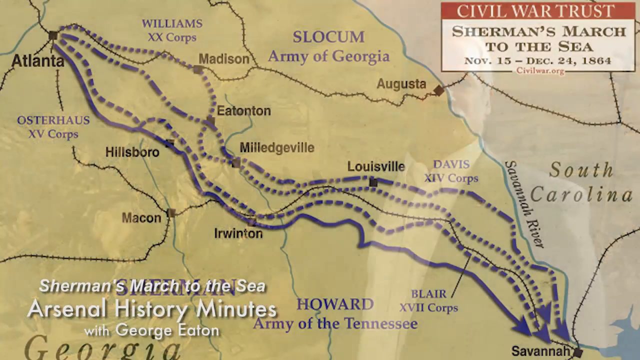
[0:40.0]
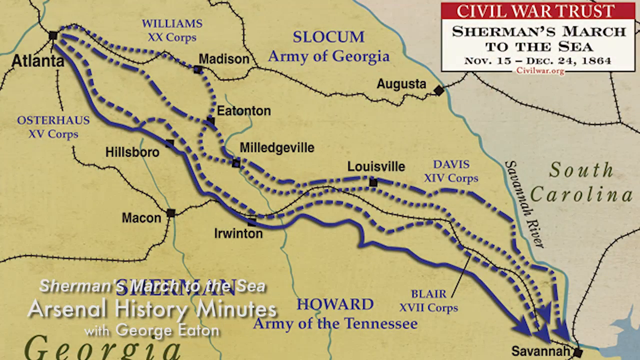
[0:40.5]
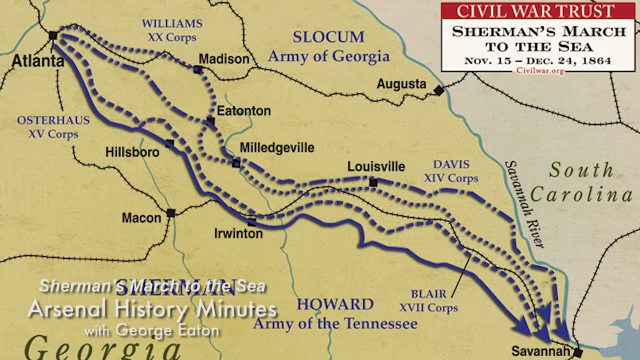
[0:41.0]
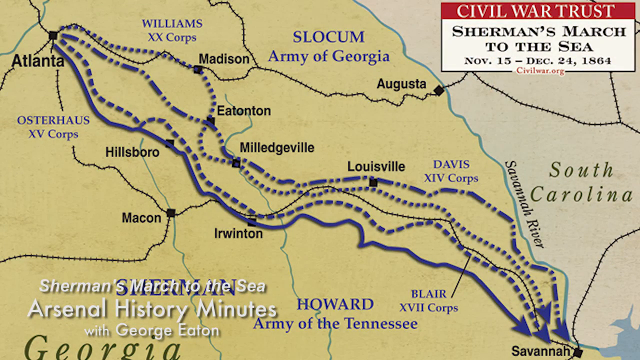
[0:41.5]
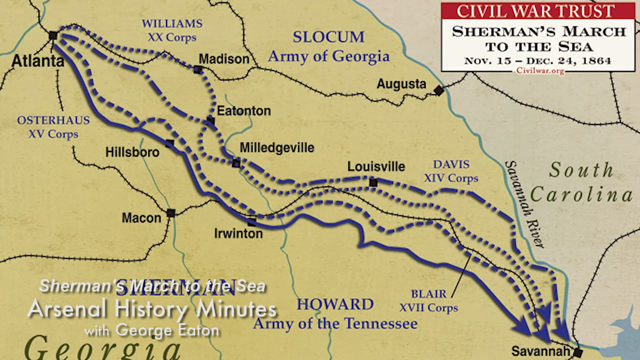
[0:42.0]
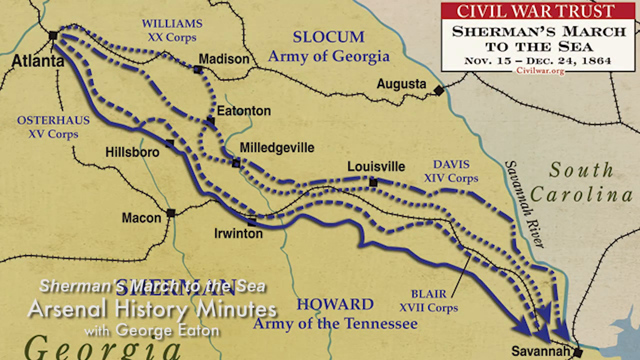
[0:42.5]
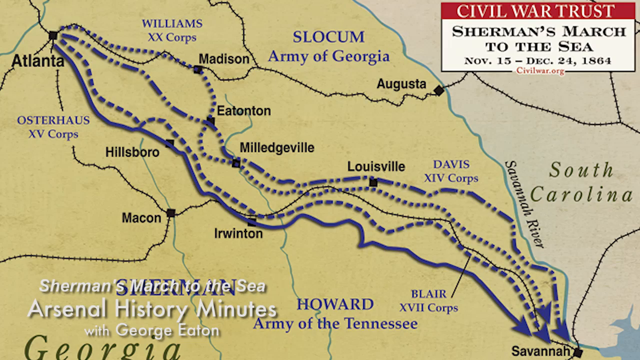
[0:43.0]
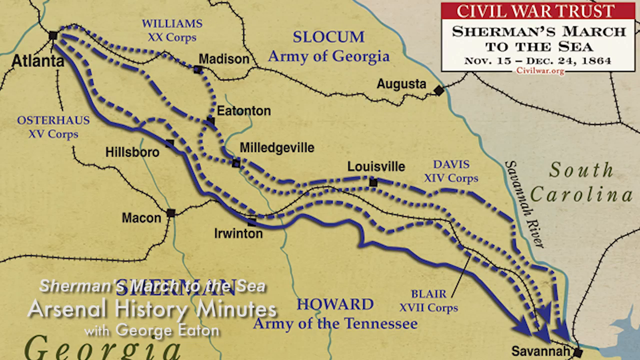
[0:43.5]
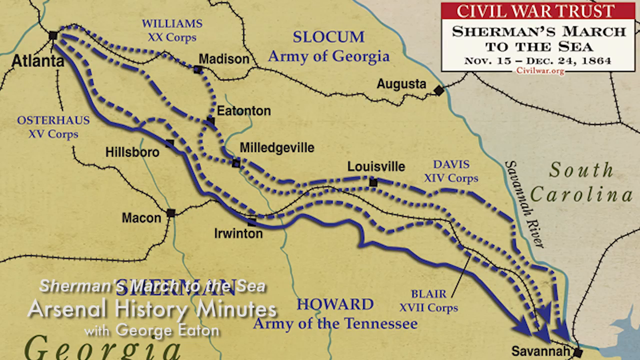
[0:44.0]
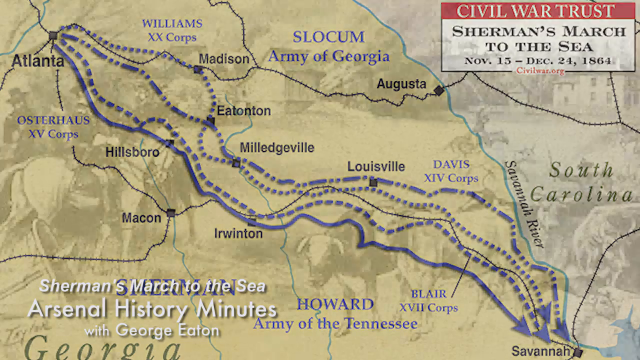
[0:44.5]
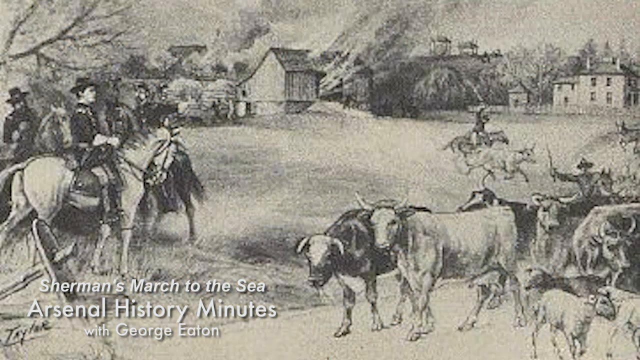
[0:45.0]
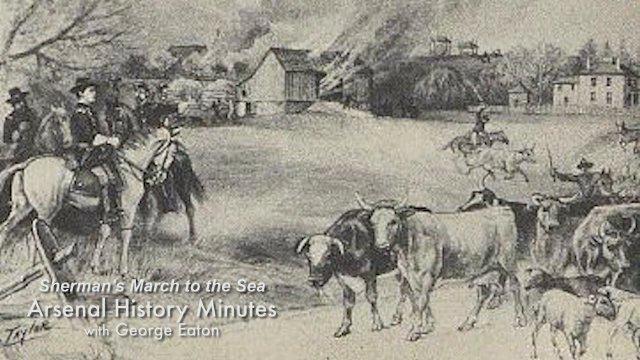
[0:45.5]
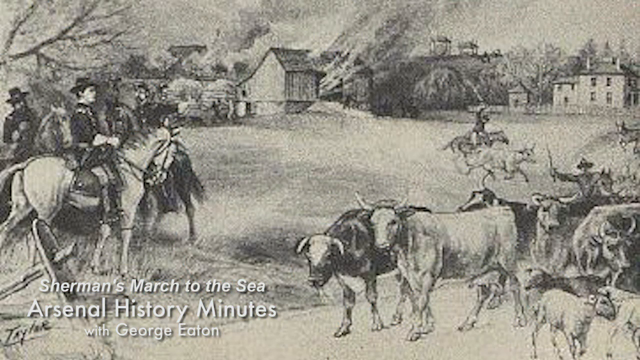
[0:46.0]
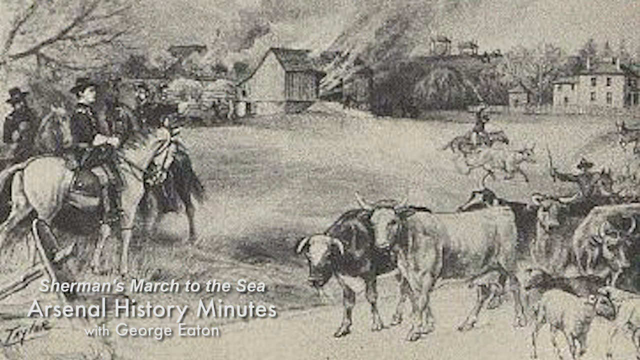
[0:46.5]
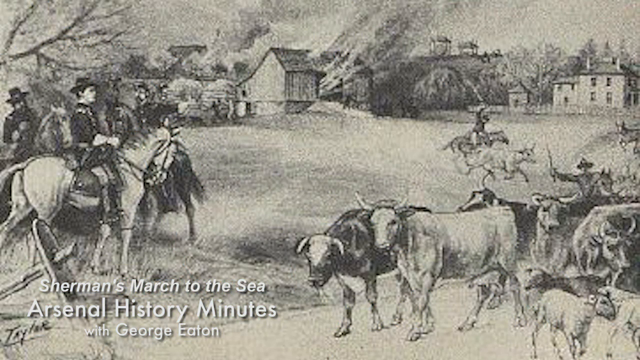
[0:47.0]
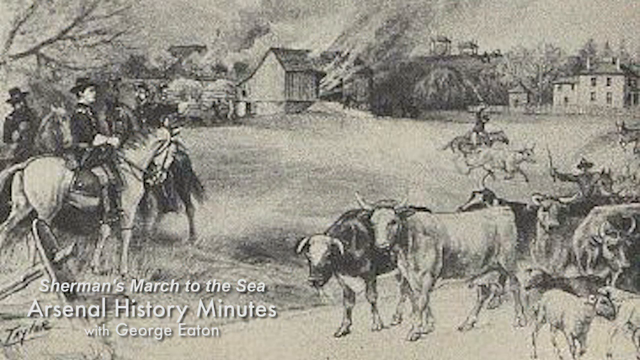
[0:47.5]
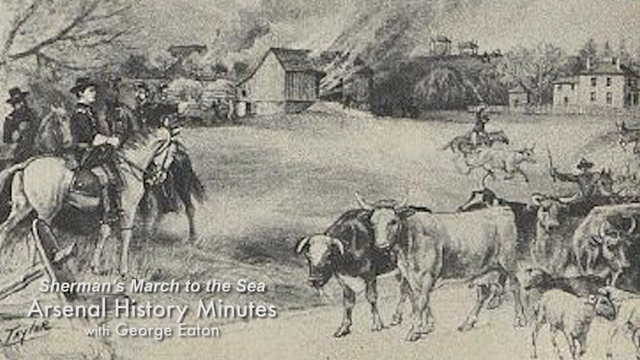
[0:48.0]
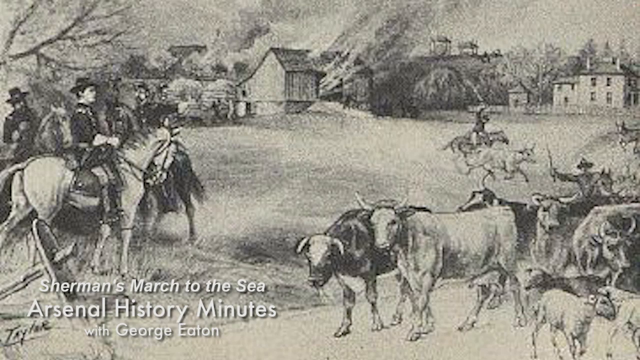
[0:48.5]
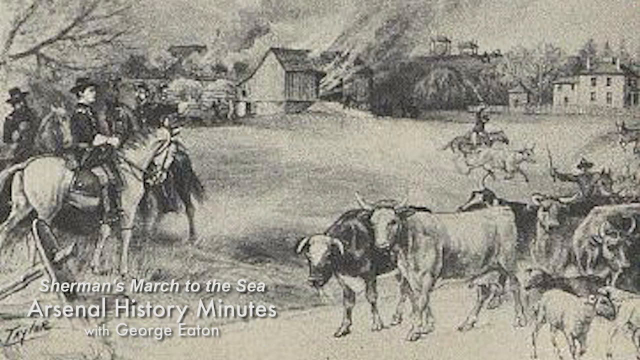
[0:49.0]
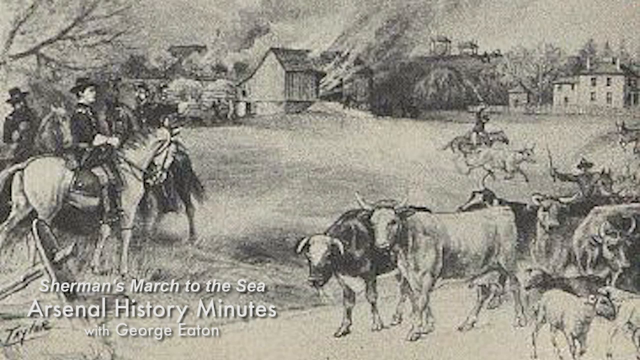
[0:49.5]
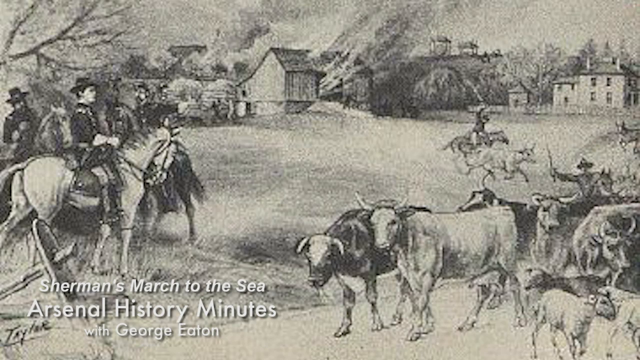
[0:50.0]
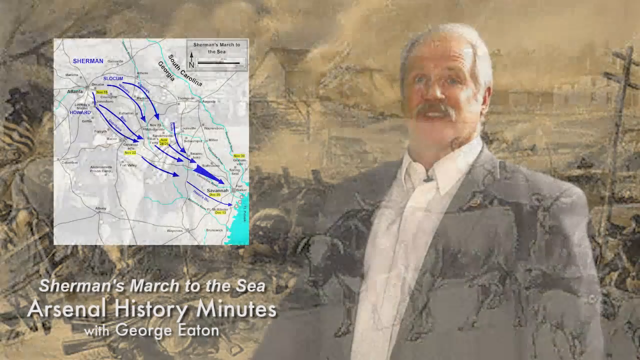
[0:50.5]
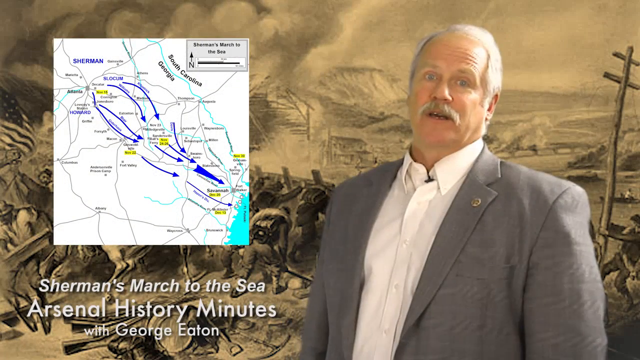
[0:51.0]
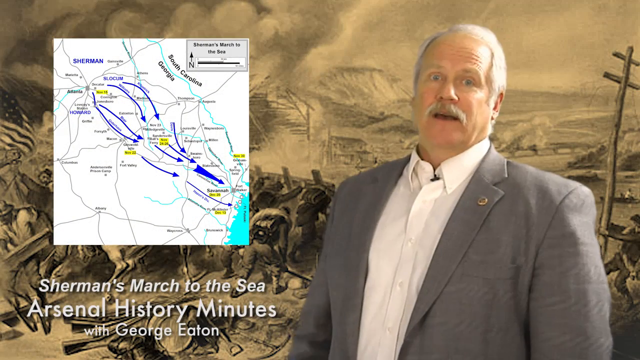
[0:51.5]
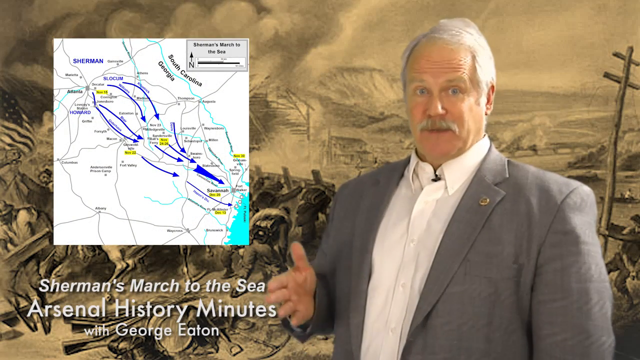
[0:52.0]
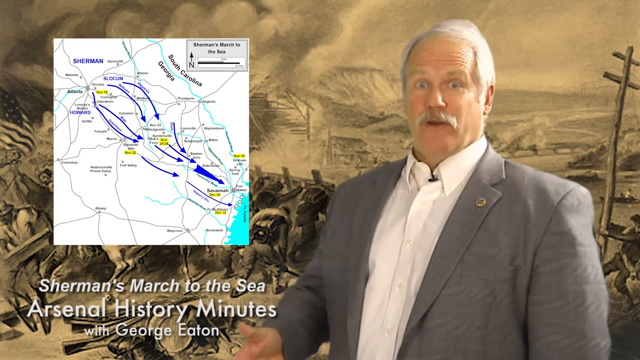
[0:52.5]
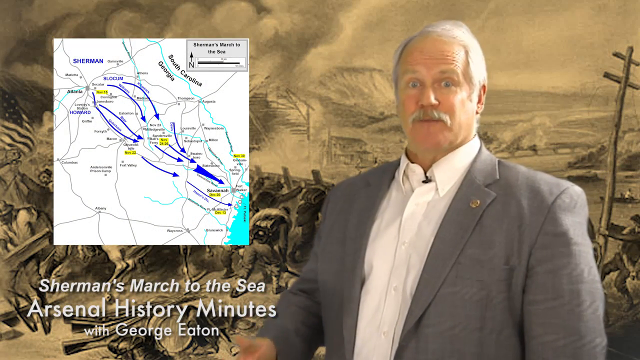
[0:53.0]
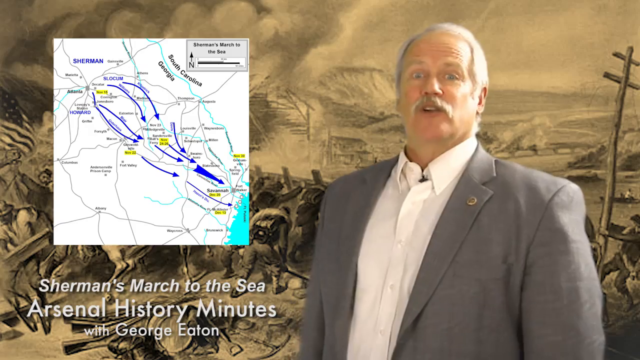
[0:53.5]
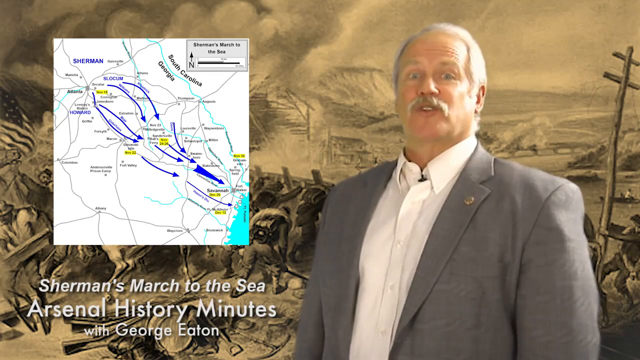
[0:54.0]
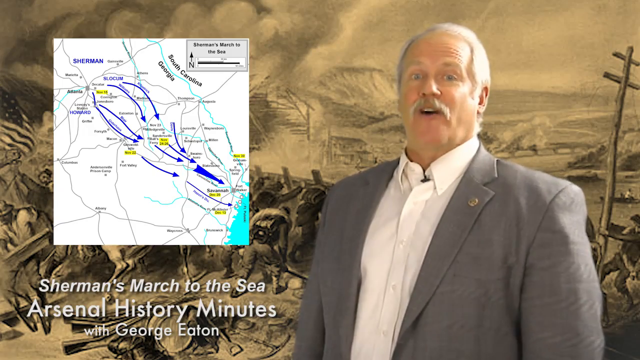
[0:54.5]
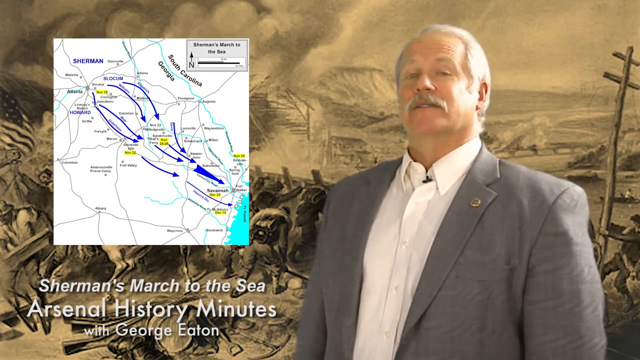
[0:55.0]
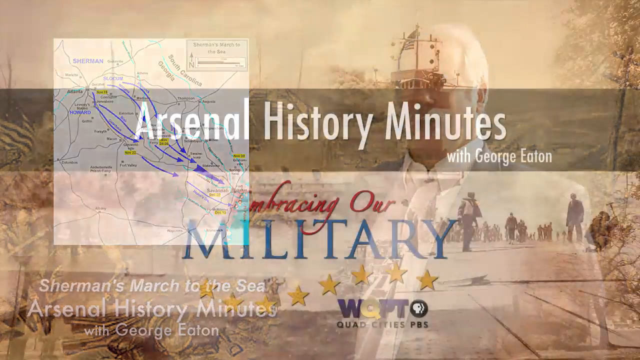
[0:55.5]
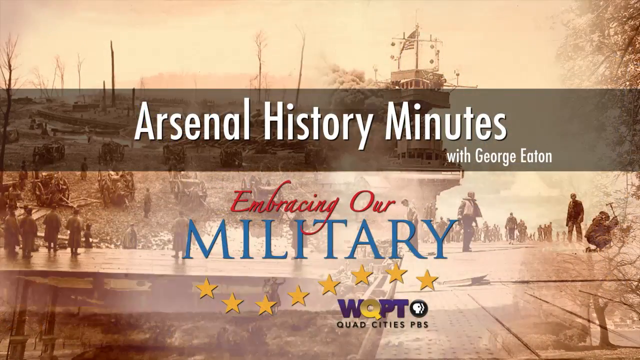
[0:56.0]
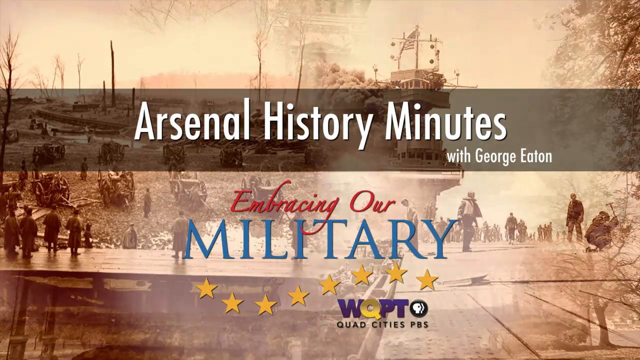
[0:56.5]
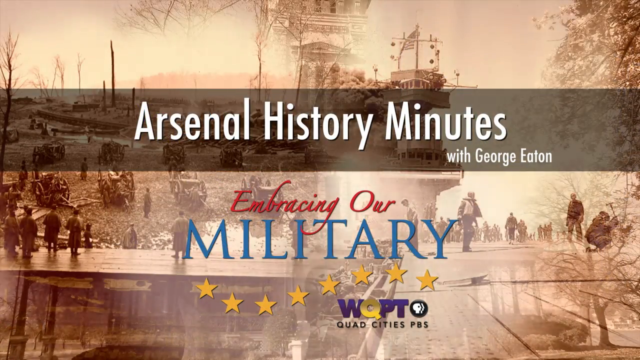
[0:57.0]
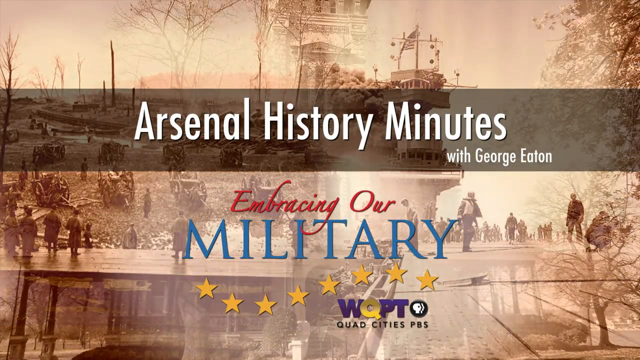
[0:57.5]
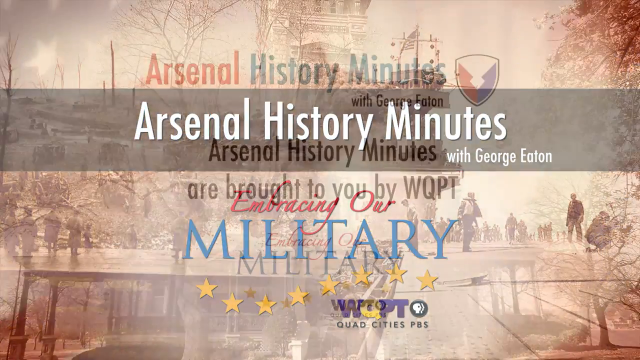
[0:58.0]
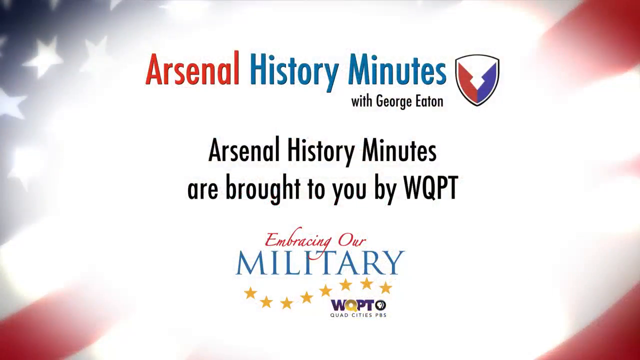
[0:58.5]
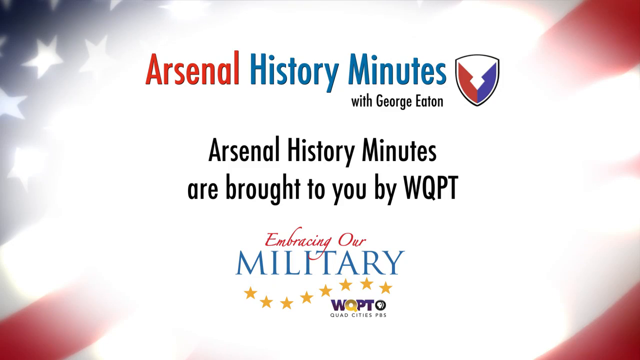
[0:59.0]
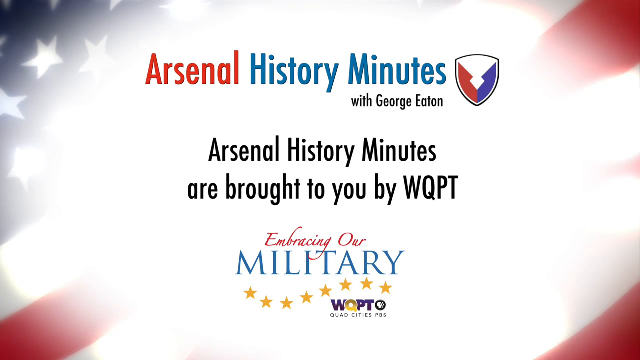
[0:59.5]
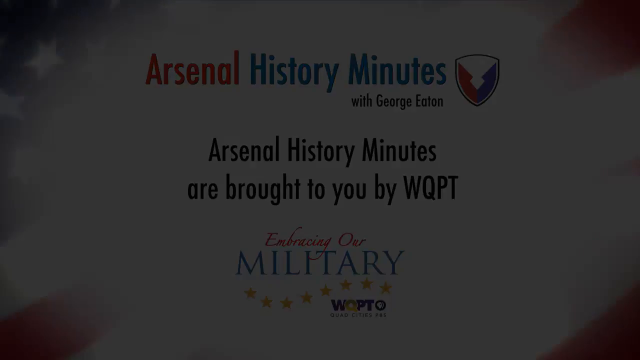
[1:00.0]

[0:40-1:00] A map is shown. At the top right is what looks like a rectangle with a red banner at the top reading "Civil War Trust" in white. Below it, black text reads "Sherman's March to the Sea" and "November 15th to December 24th, 1864," and underneath it reads "CivilWar.org." The map appears to be yellow, with a blue line running from the top left to the bottom right. At the top left there appears to be Atlanta with a black dot, and the blue lines lead down to the bottom right, where it reads "Savannah." Cities in the middle include Eatonton, Milledgeville, Louisville and Irvington. On the right side, "South Carolina" is written in white. White text at the bottom left reads "Sherman's March to the Sea, Arsenal History Minutes with George Eaton." The video then transitions to what looks like a black and white picture: a few men on horseback are on the left, and in the background some houses appear to be on fire at the bottom right, with houses burning in the middle. In the foreground there appear to be cows and oxen, around five of them. In the background on the right, there appears to be a man on horseback with a sword raised above him, rushing toward the right. The video returns to the narrator and shows the map again, with Atlanta and blue lines toward the bottom right, and blue text at the top left reading "Sherman." The man appears to wear a gray coat with a white shirt and has a white mustache. He faces the viewer, turned slightly to the left, talking directly to the viewer and raising his right hand then putting it back down. An outro follows: the background appears to show yellow and black pictures of history, people and buildings, with a transparent black rectangle running left to right across the middle. White text reads "Arsenal History Minutes with George Eaton," with "Embracing Our Military" below and "WQPT Quad Cities PBS" at the bottom. The video then transitions to a white background with what looks like an American flag in the corners, and text reads "Arsenal History Minutes with George Eaton. Arsenal History Minutes are brought to you by WQPT, Embracing Our Military."